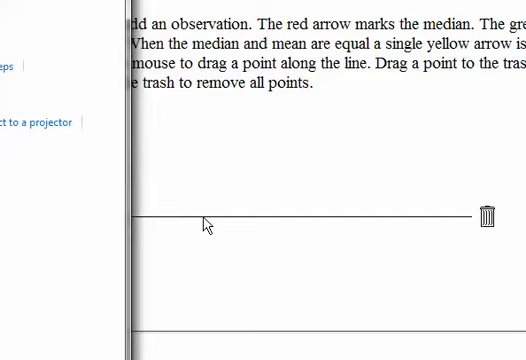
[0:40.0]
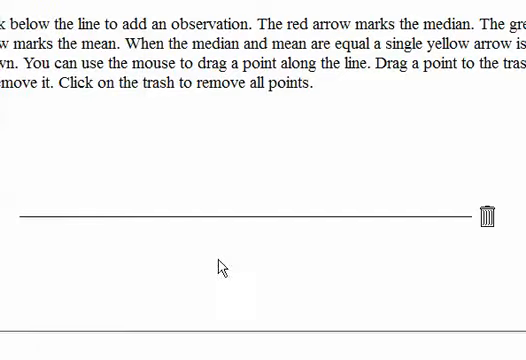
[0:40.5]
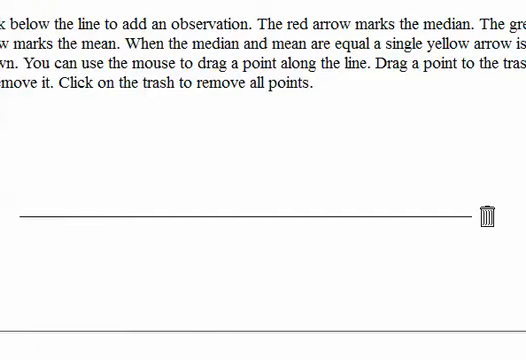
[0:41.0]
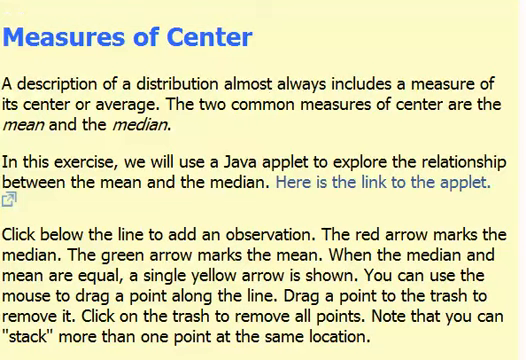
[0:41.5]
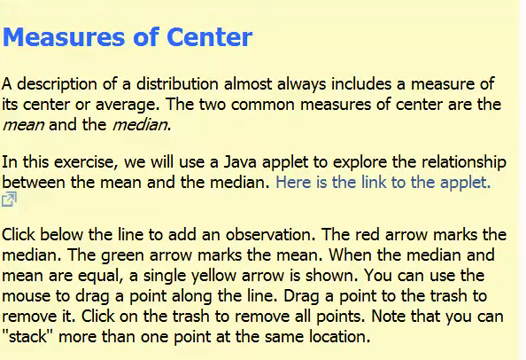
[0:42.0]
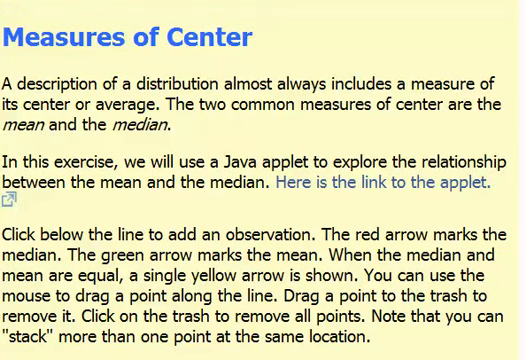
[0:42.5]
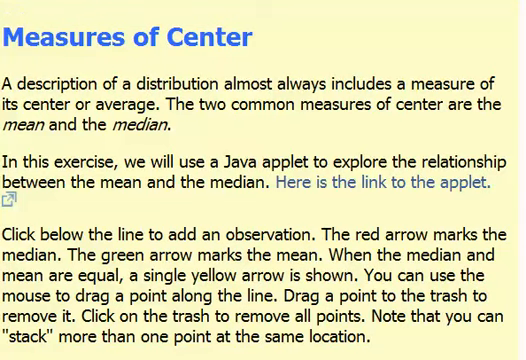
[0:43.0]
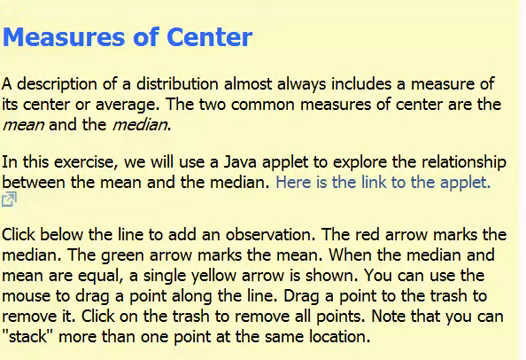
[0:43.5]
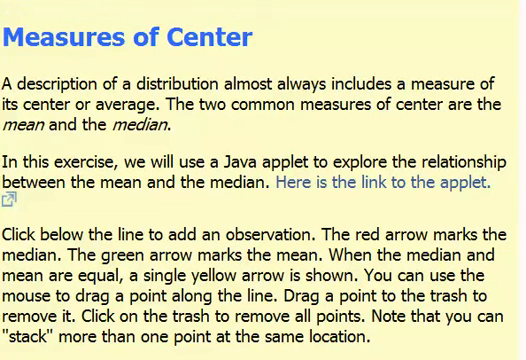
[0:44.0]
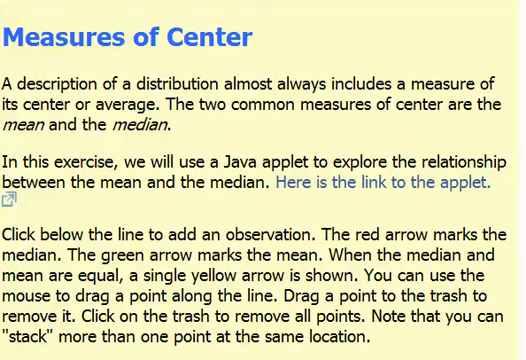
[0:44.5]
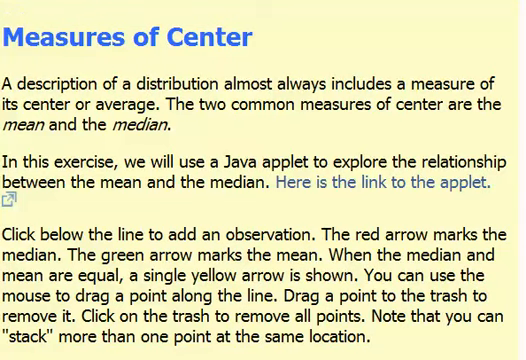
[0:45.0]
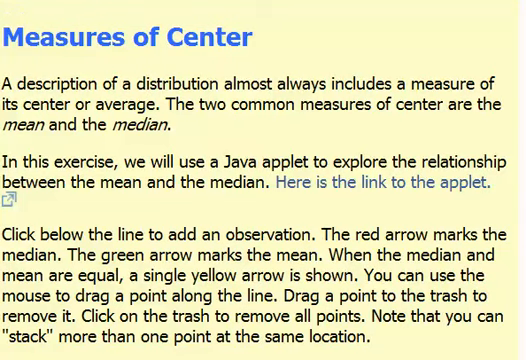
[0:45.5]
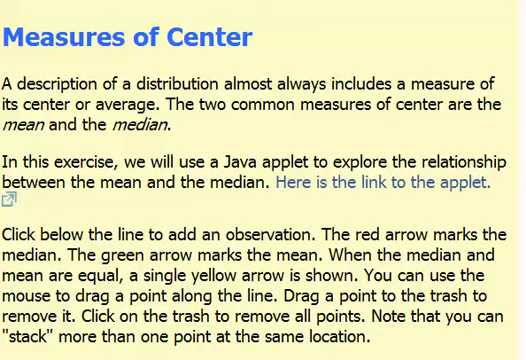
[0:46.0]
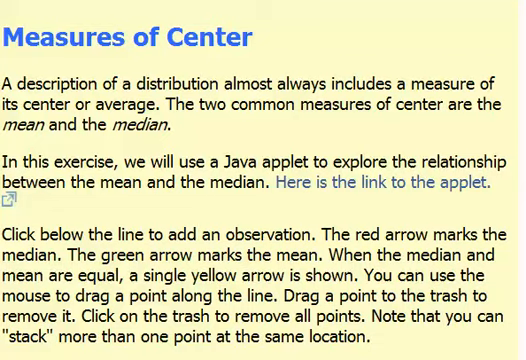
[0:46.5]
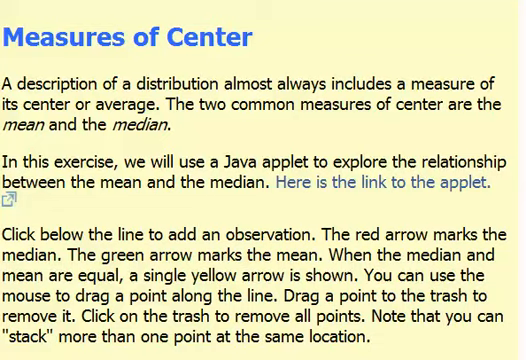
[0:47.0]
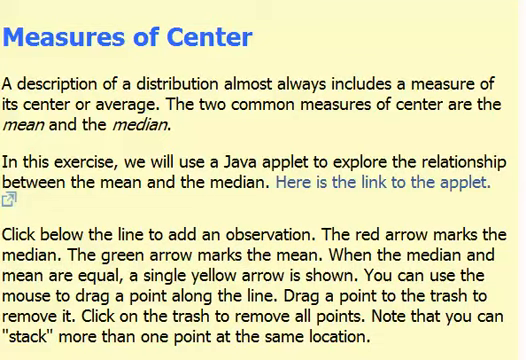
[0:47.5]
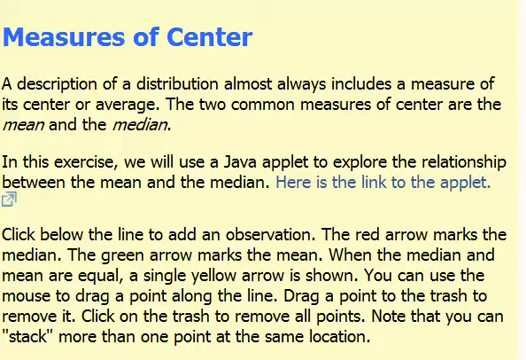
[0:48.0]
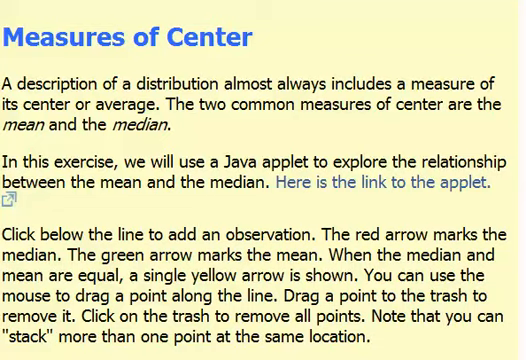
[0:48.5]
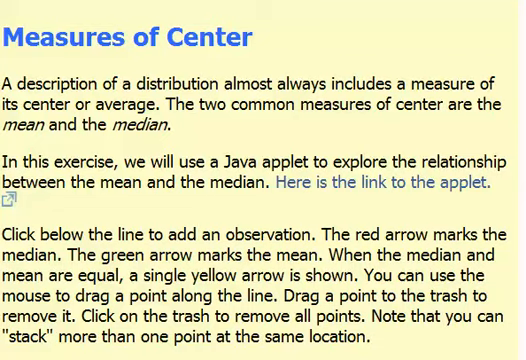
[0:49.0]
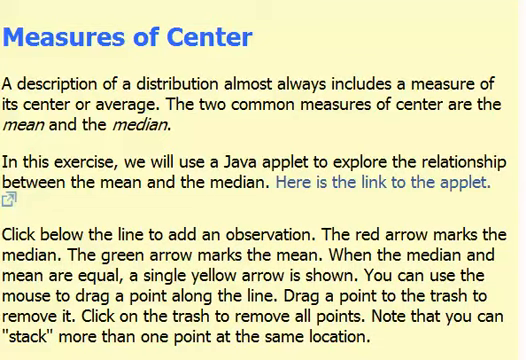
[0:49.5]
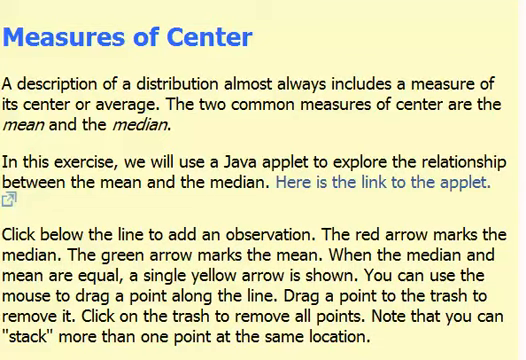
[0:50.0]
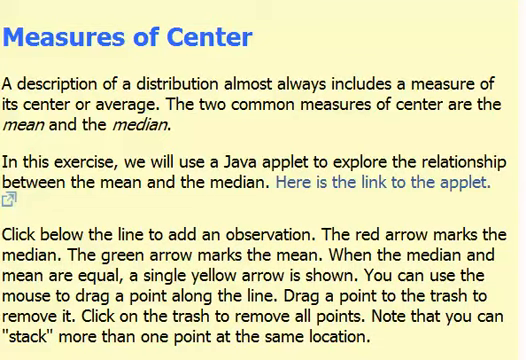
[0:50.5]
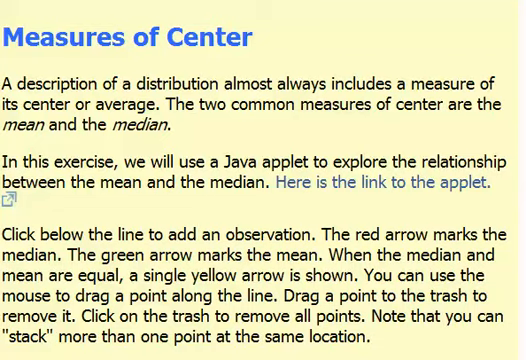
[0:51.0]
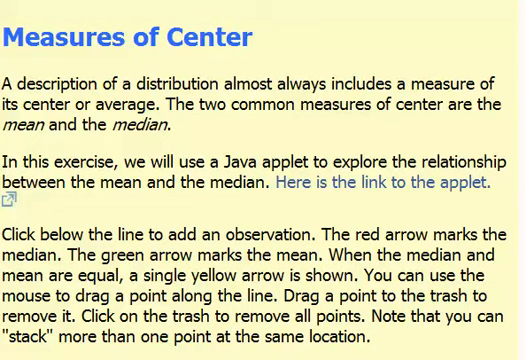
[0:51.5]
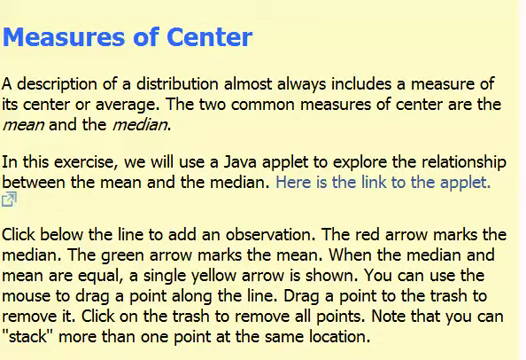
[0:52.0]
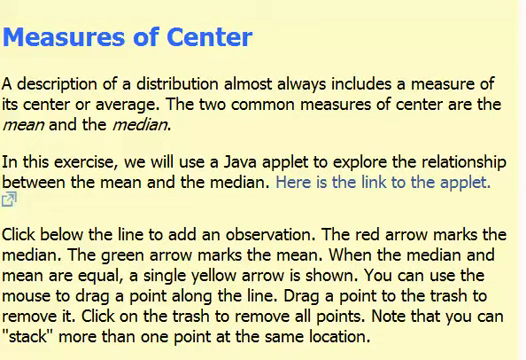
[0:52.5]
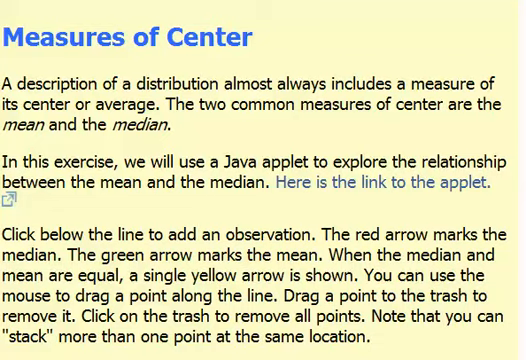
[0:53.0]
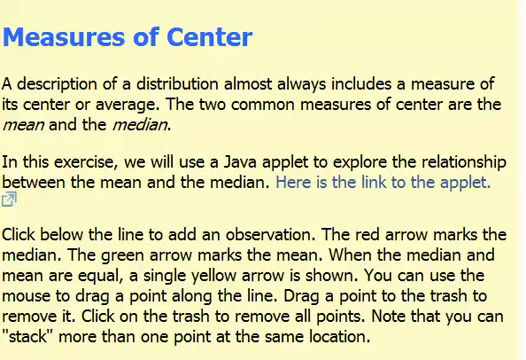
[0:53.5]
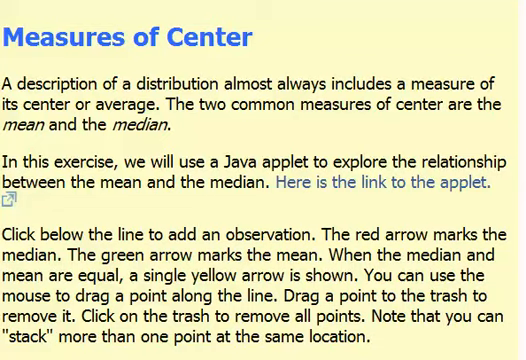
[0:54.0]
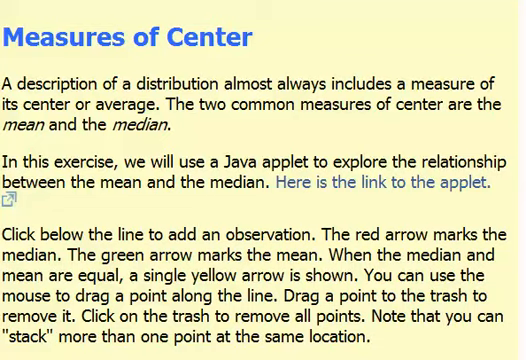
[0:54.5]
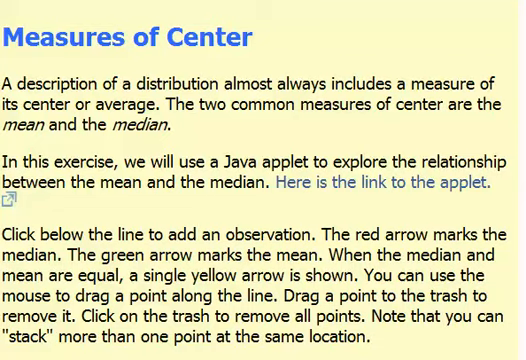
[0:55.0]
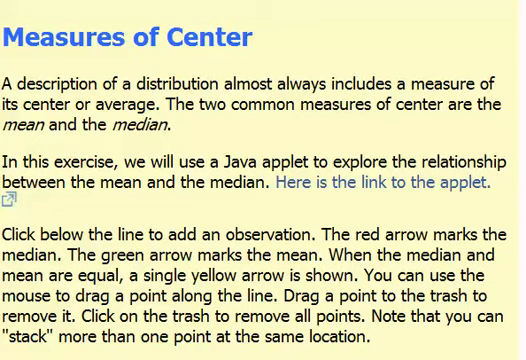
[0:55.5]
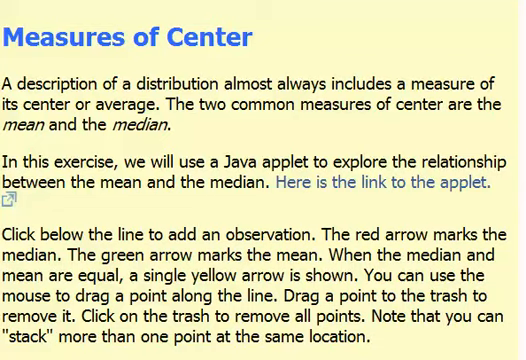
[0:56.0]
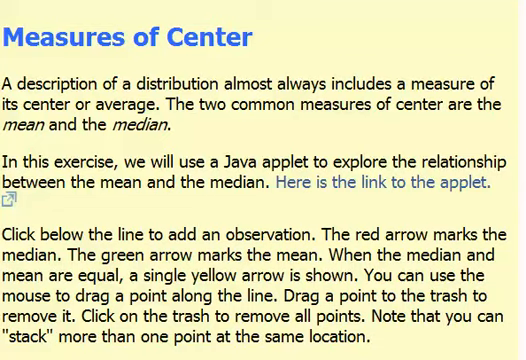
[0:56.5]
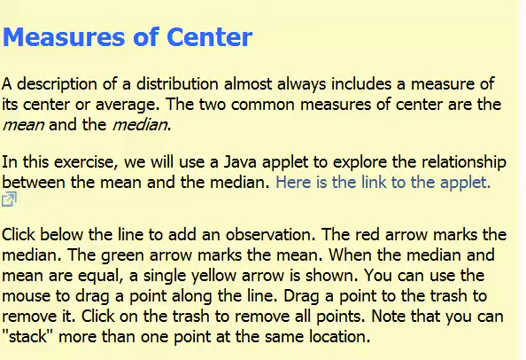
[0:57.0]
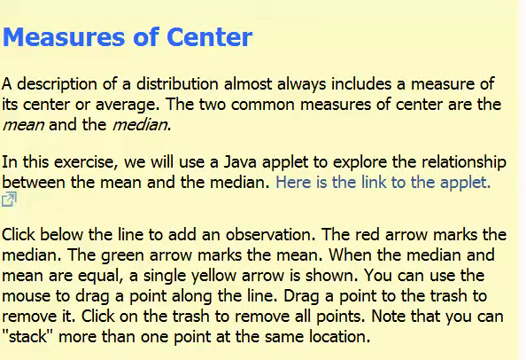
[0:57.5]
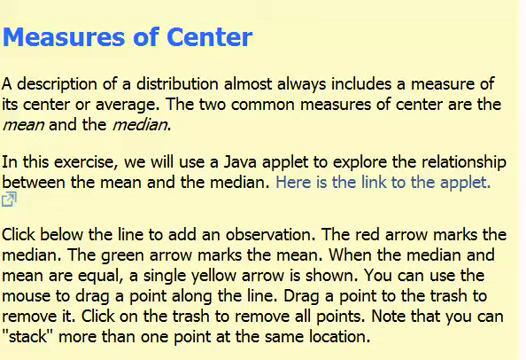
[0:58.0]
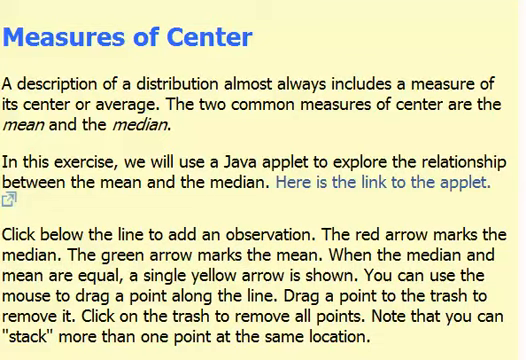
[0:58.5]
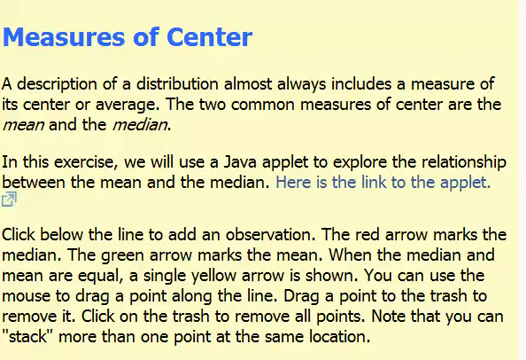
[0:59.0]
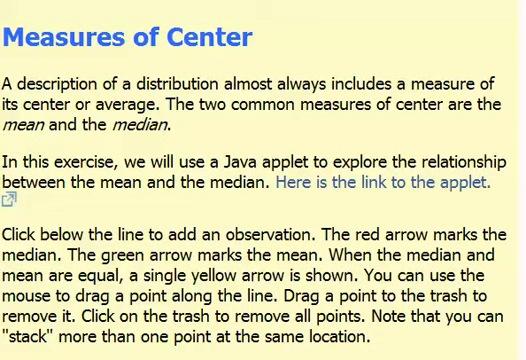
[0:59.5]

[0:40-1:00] The user is using the mouse to activate a Java applet on the page. A trash can is over to the right, and the mouse pointer is in the center, hovering over the bar. They click it, and the view goes back to the definition of measures of center, which reads "a description of a distribution almost always includes a measure of its center or average. The two common measures of center are the mean and the median. In this exercise, we will use a Java applet to explore the relationship between the mean and the median." There is a link that says "click here" and the line "here is the link to the applet." The next paragraph reads "click below the line to add an observation. The red arrow marks the median. The green arrow marks the mean. When the median and mean are equal, a single yellow arrow is shown. You can use the mouse to drag a point along the line, drag a point to the trash to remove it. Click on the trash to remove all points. Note that you can stack more than one point at the same location."